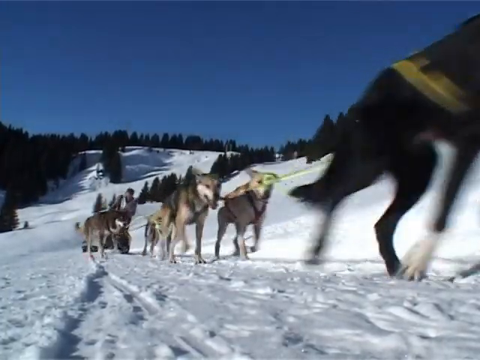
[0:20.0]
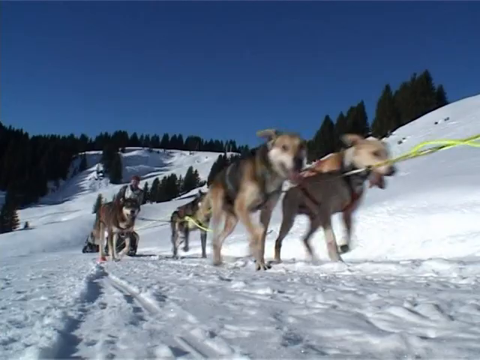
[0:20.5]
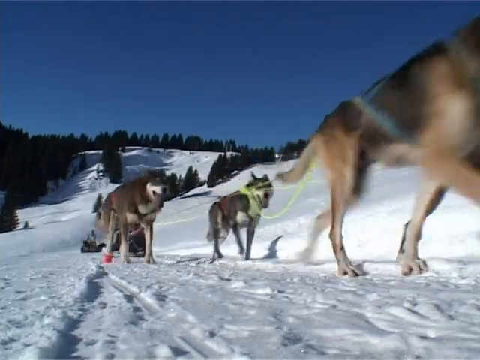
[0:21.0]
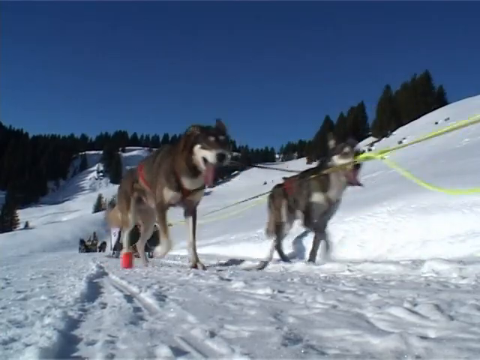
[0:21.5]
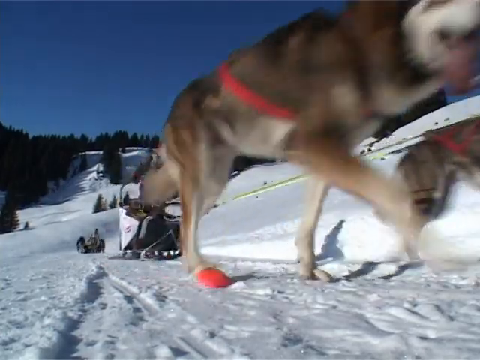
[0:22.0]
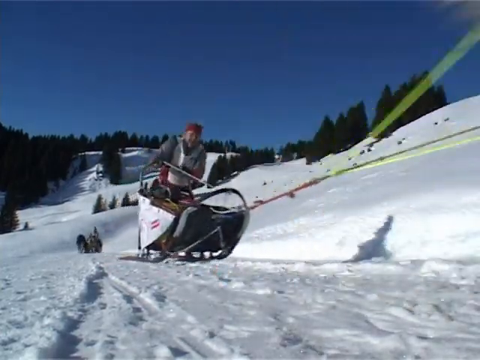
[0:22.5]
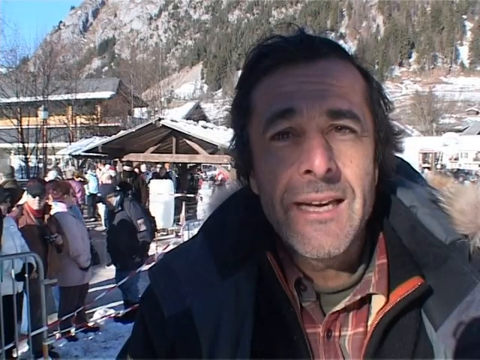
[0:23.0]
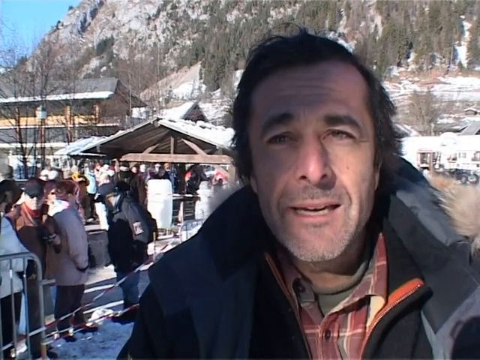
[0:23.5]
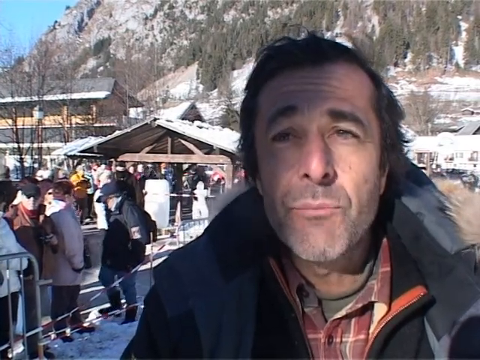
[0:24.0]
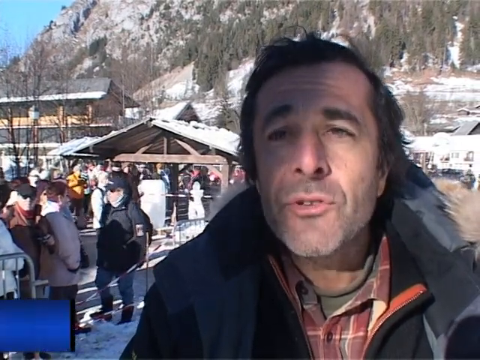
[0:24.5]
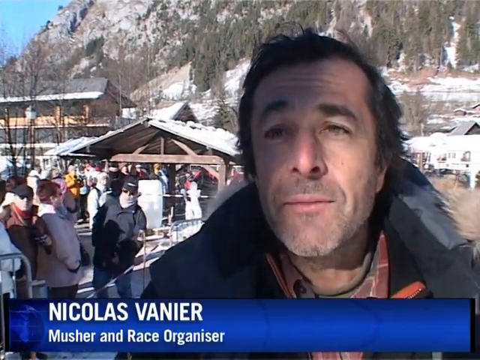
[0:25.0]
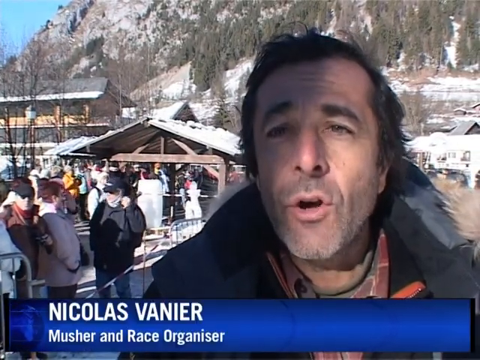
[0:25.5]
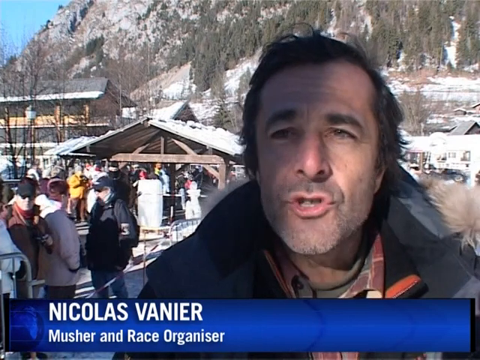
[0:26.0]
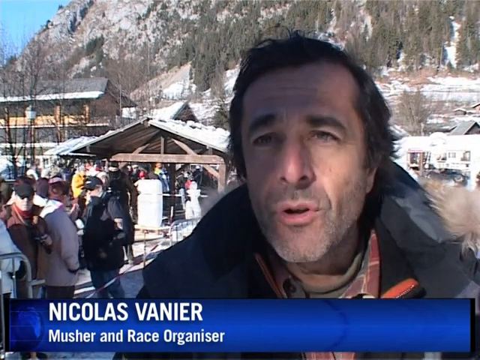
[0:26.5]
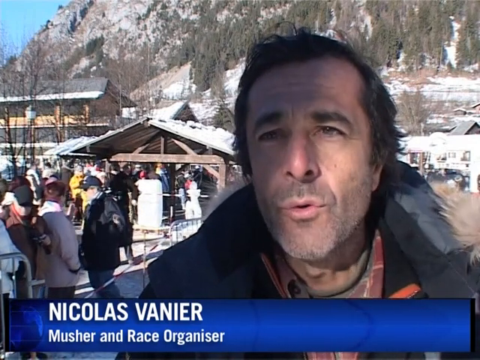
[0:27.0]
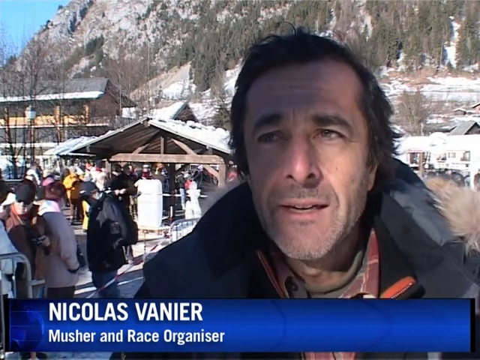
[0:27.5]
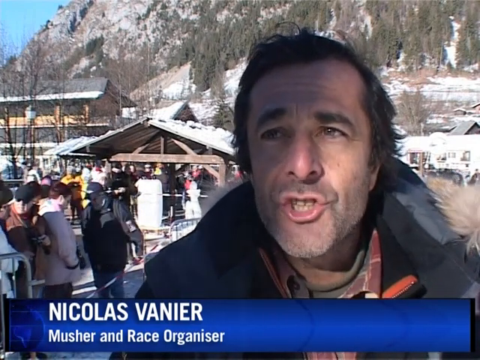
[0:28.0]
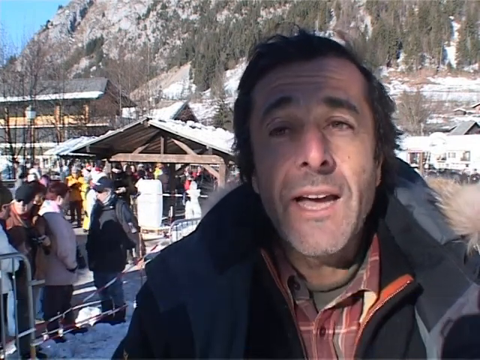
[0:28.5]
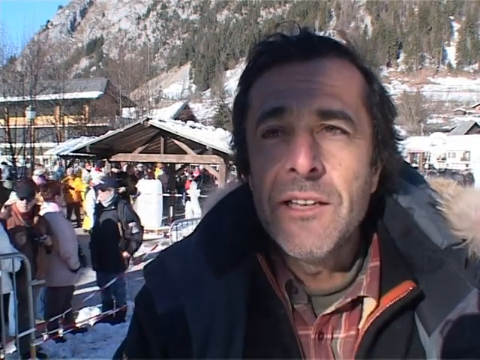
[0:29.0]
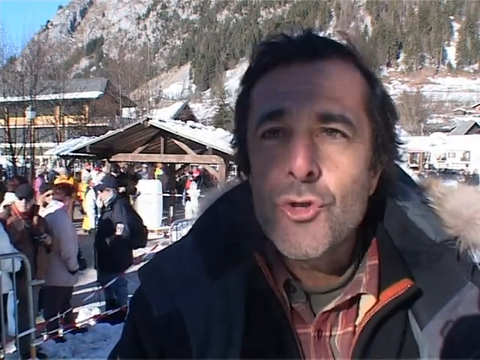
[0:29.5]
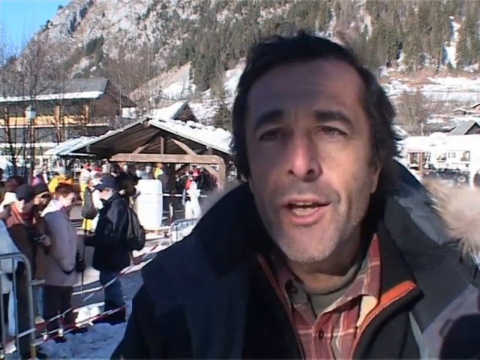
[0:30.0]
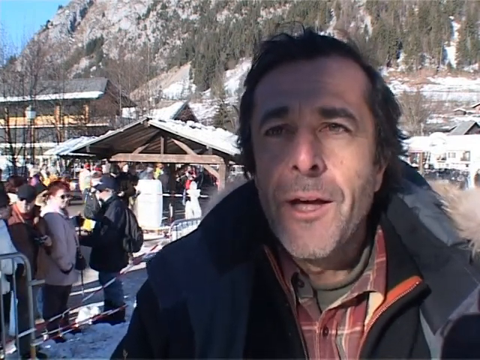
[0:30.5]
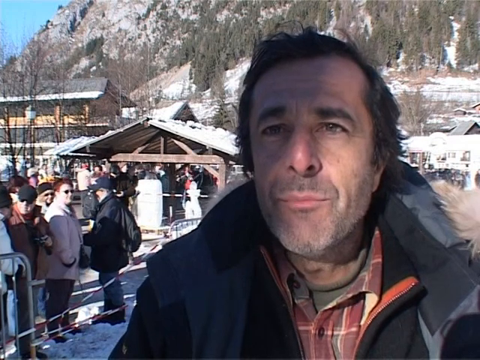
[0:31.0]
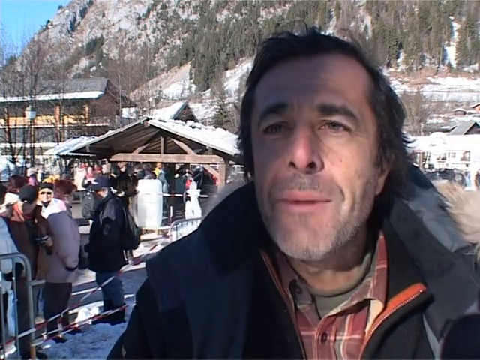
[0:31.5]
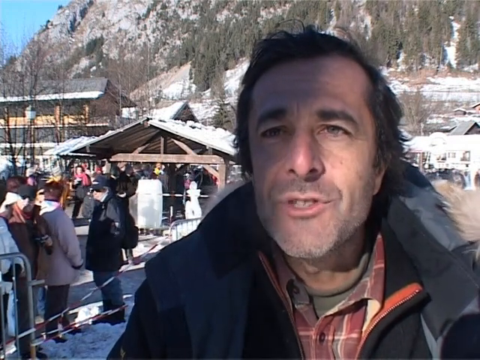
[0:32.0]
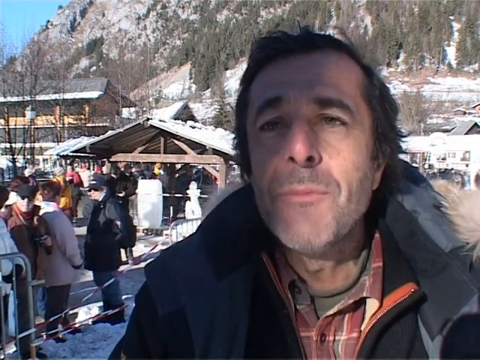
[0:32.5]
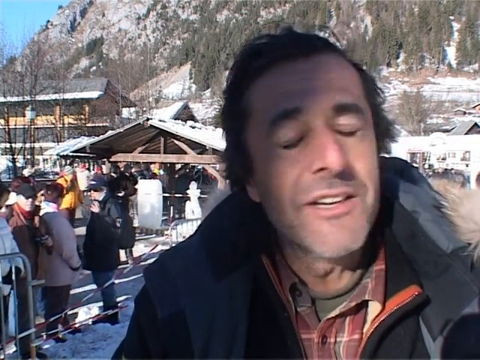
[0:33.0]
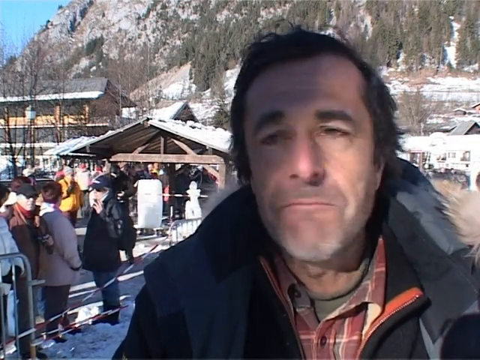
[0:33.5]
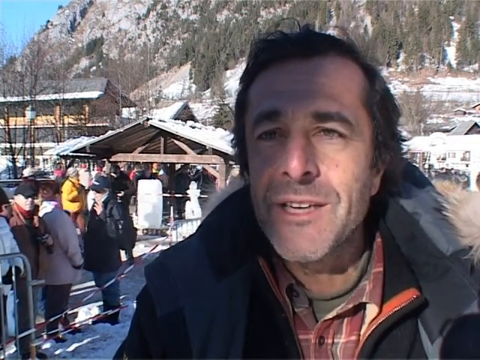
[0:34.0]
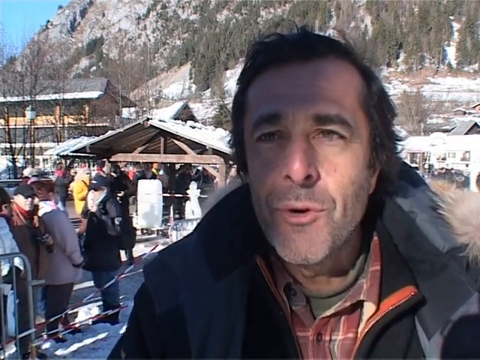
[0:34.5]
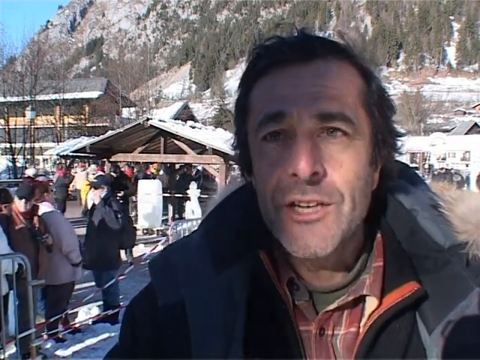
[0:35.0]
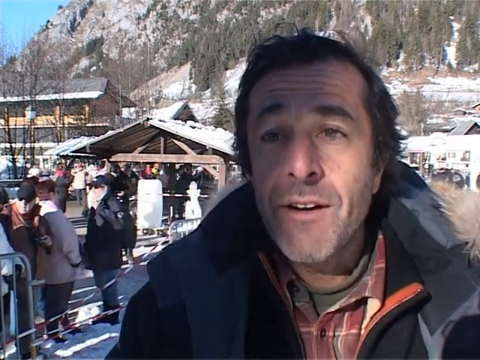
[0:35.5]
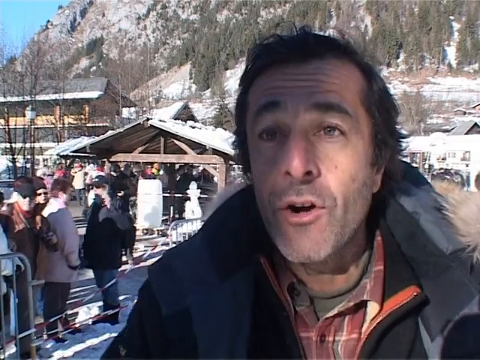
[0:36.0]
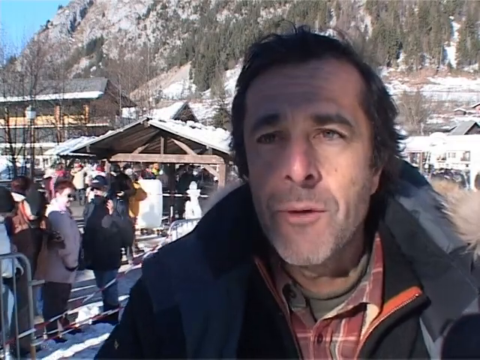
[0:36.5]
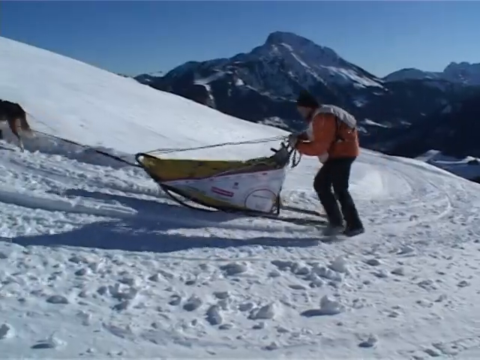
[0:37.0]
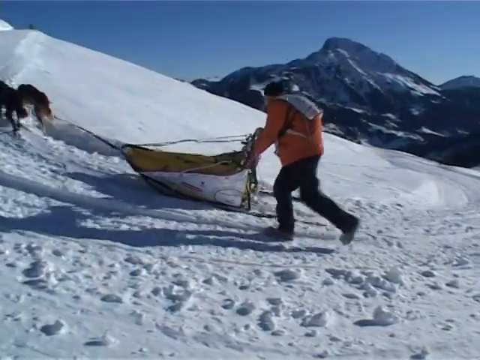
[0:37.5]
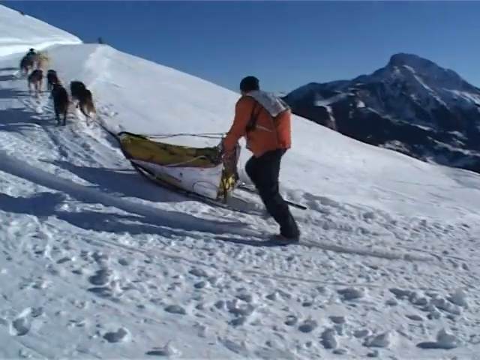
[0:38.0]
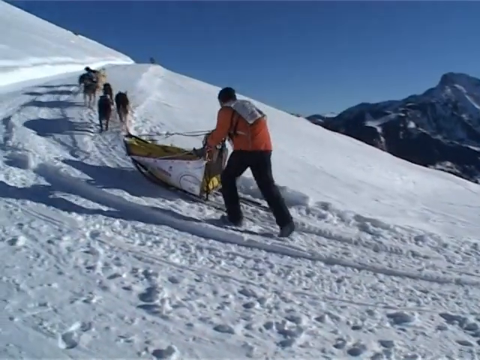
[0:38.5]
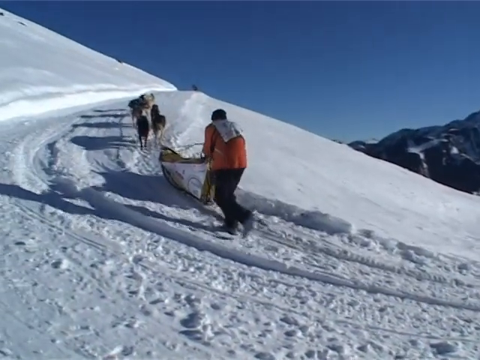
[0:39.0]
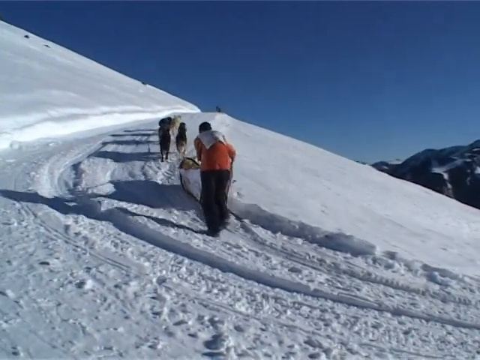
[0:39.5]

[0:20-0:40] Teams of dogs pull sleds through the snow, up hills and down hills, with mountains and trees in the background. Several of the dogs wear some type of sock or shoe on one leg; one is red. A man named Nicholas Vanier, the musher and race organizer, appears. He is in his mid to late 40s, with dark hair and dark eyes, and wears a jacket with fur on it and a shirt underneath. Behind him is a mountain with trees.